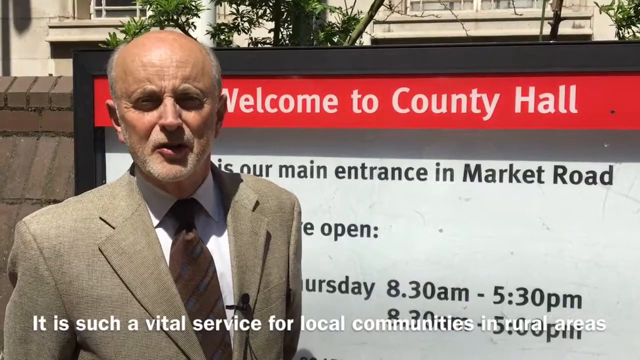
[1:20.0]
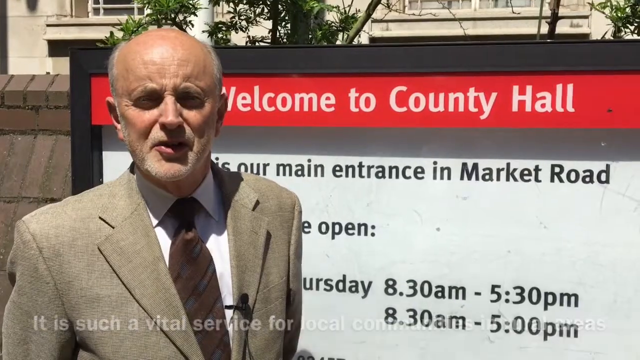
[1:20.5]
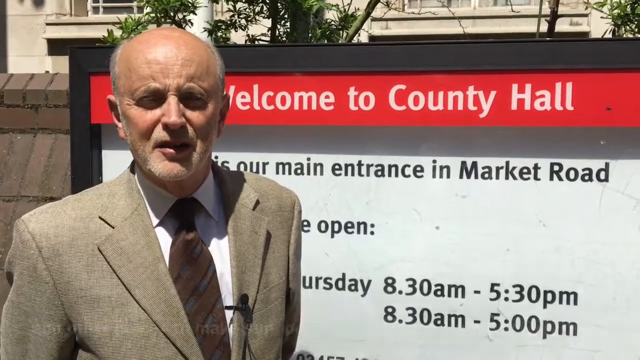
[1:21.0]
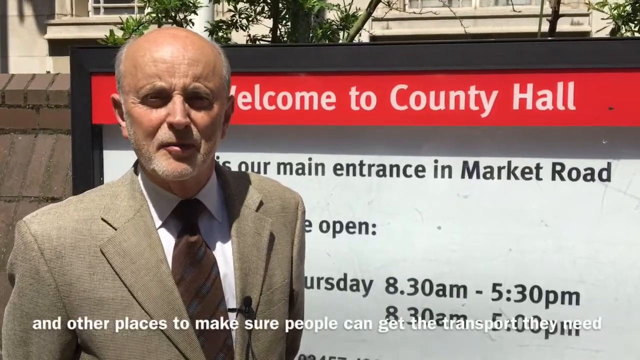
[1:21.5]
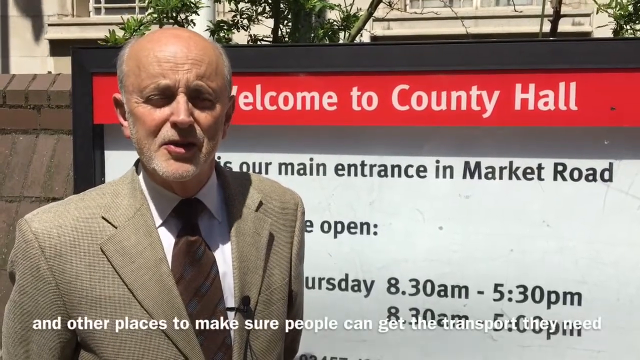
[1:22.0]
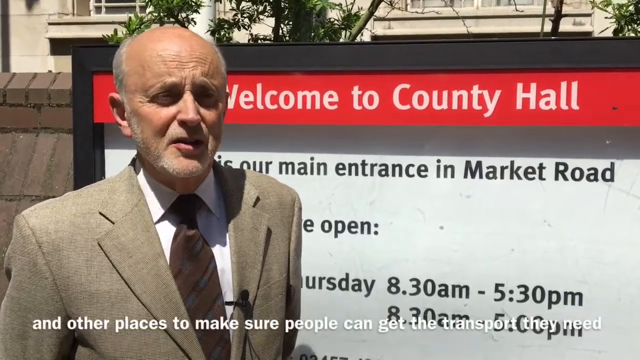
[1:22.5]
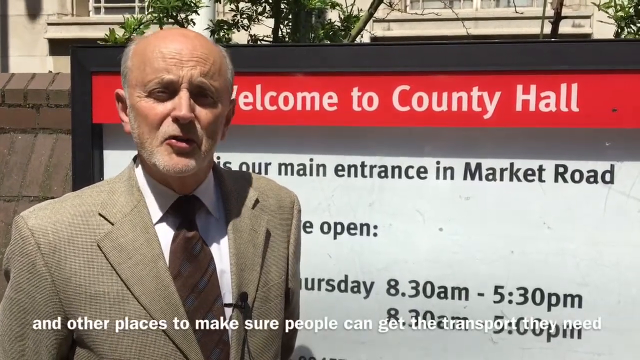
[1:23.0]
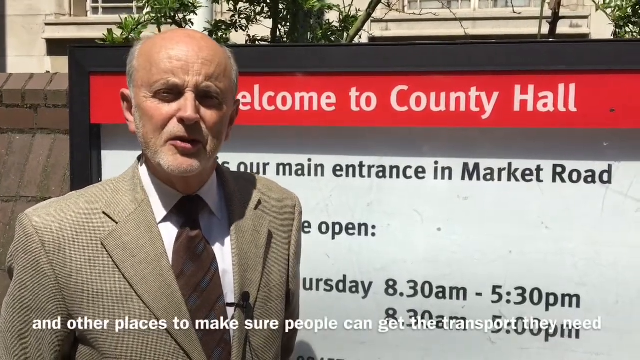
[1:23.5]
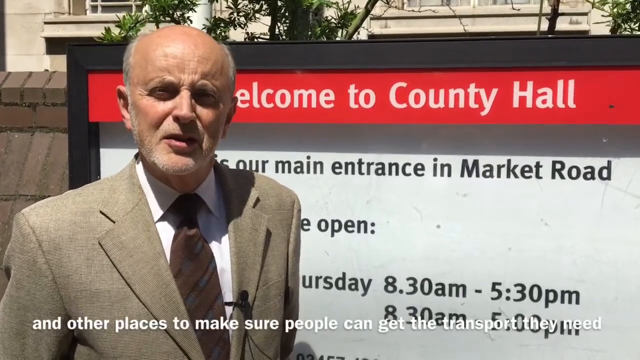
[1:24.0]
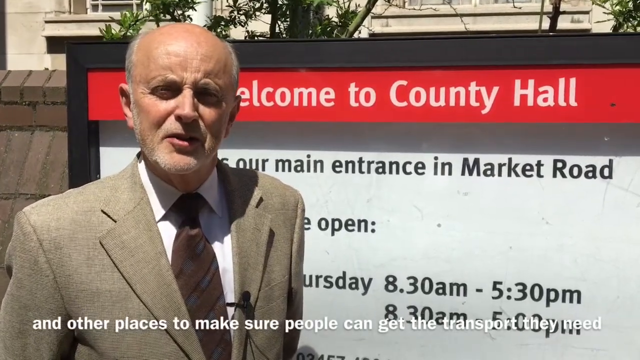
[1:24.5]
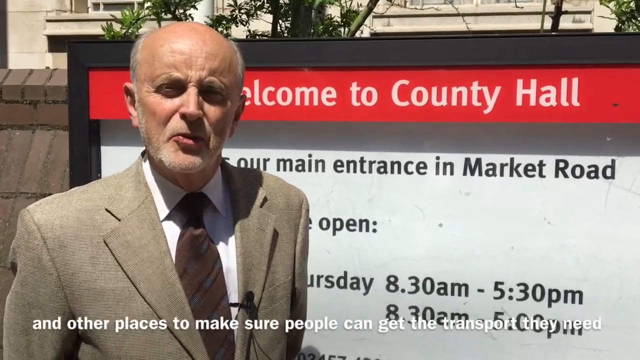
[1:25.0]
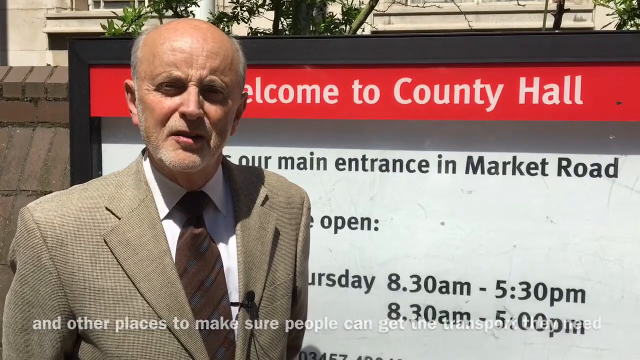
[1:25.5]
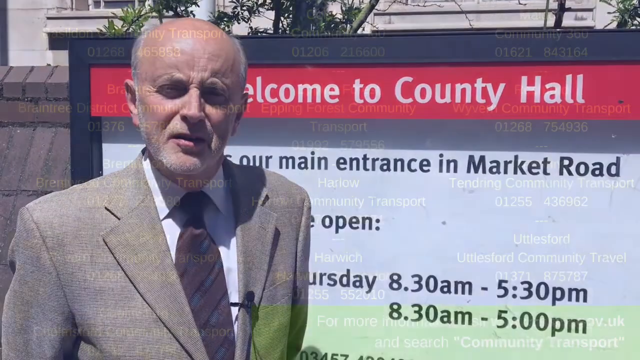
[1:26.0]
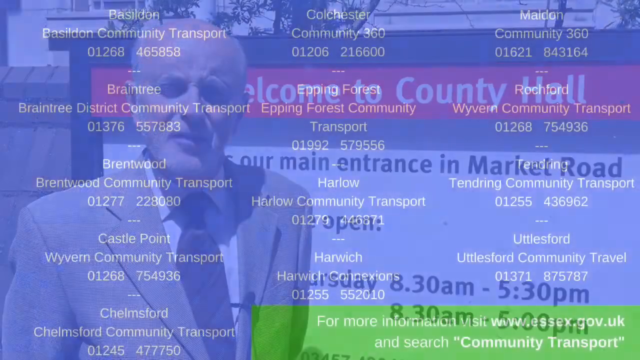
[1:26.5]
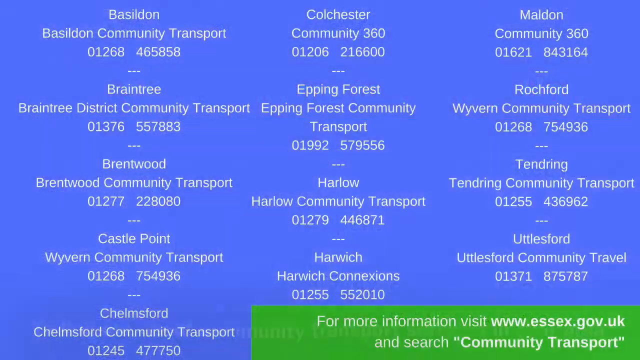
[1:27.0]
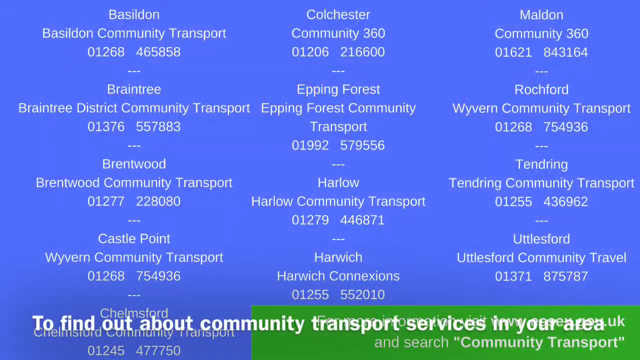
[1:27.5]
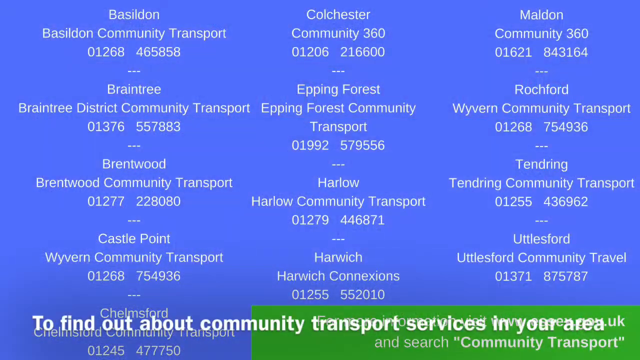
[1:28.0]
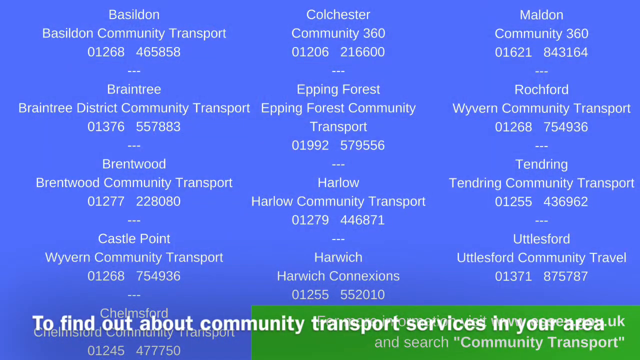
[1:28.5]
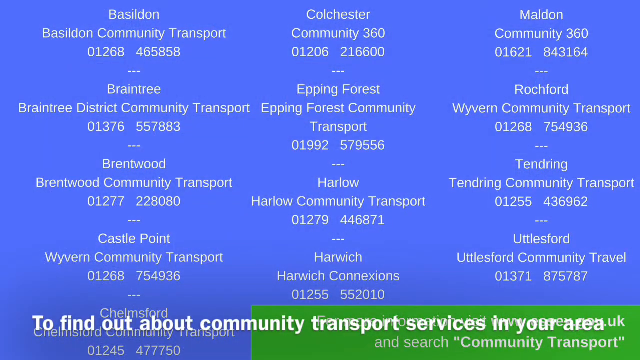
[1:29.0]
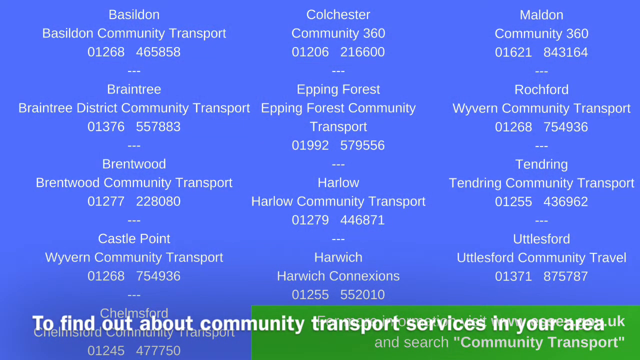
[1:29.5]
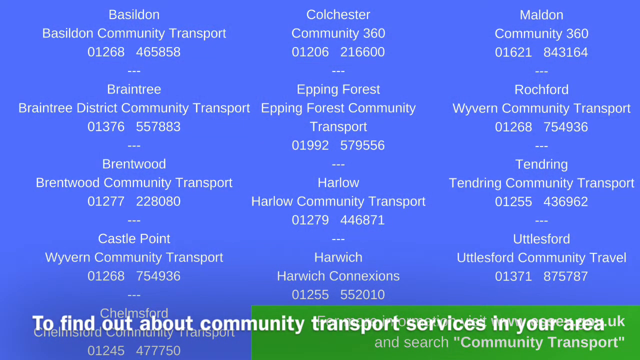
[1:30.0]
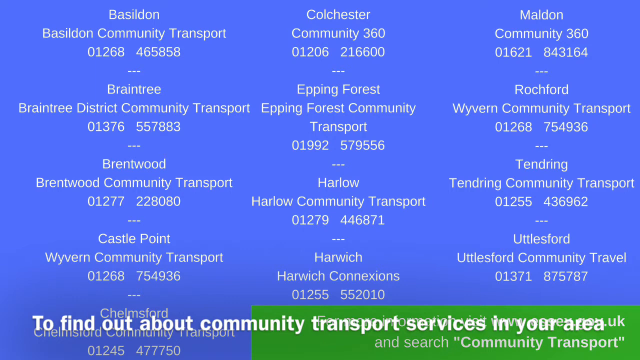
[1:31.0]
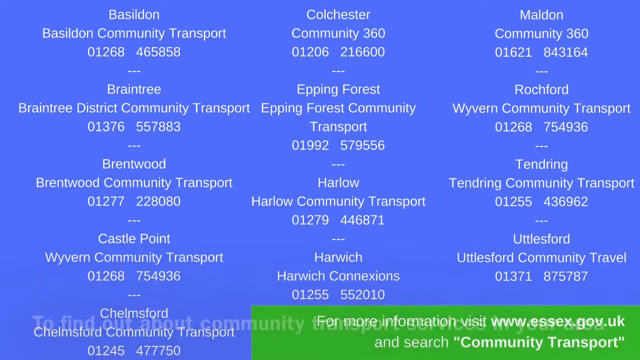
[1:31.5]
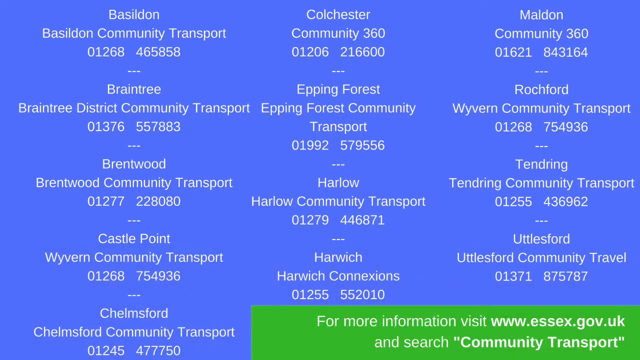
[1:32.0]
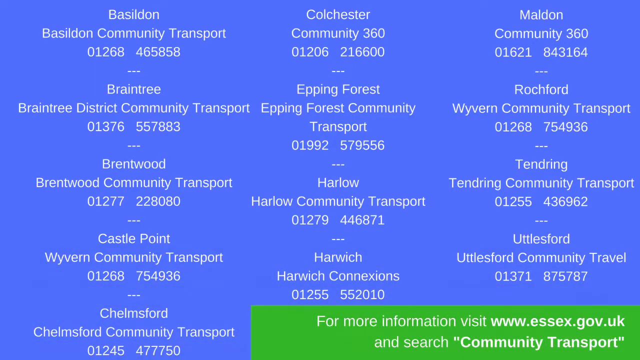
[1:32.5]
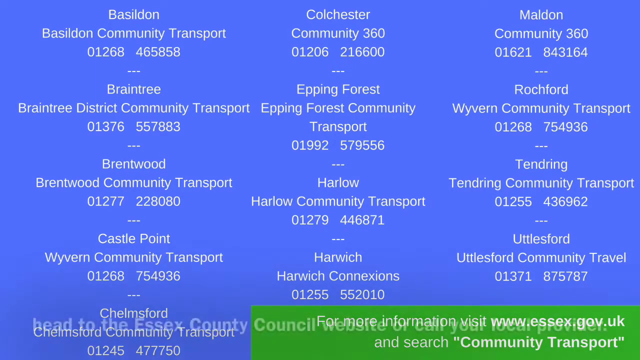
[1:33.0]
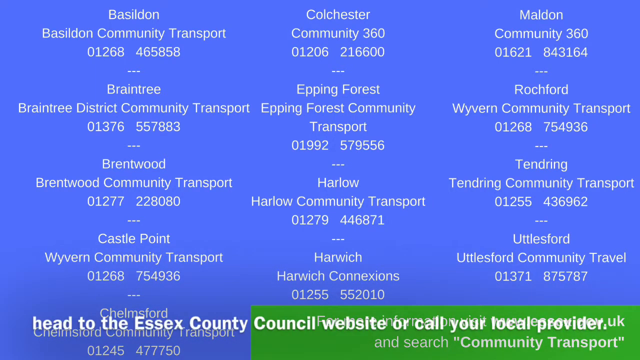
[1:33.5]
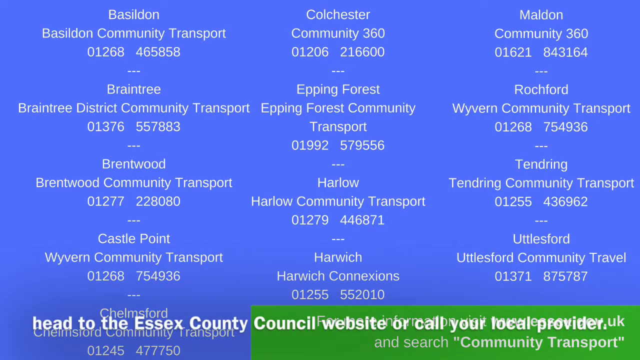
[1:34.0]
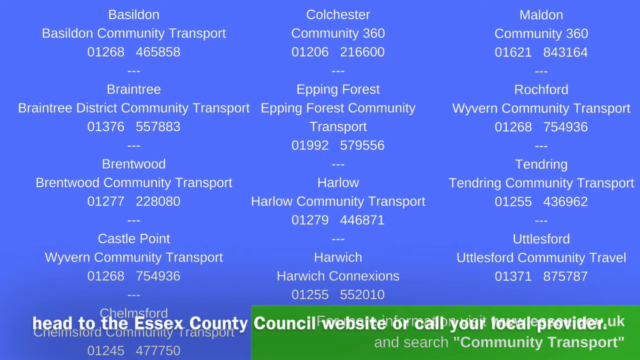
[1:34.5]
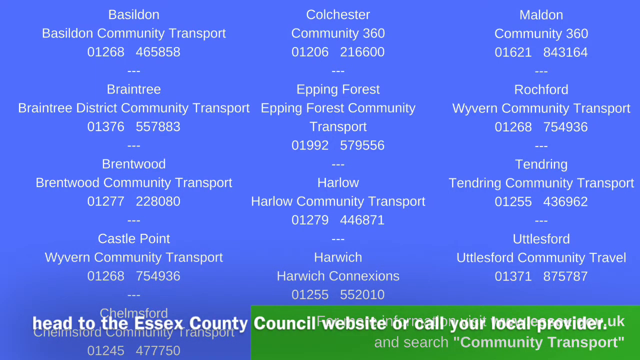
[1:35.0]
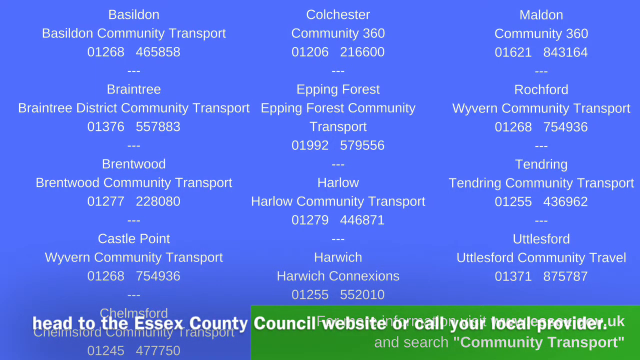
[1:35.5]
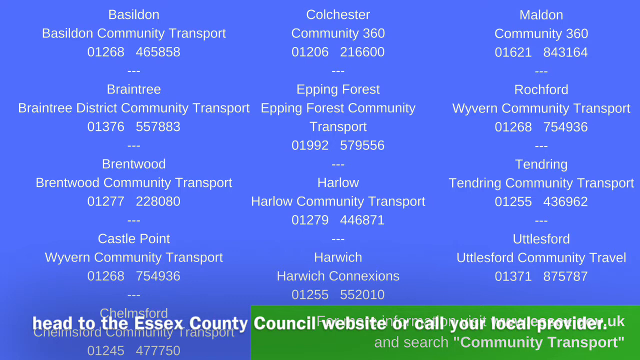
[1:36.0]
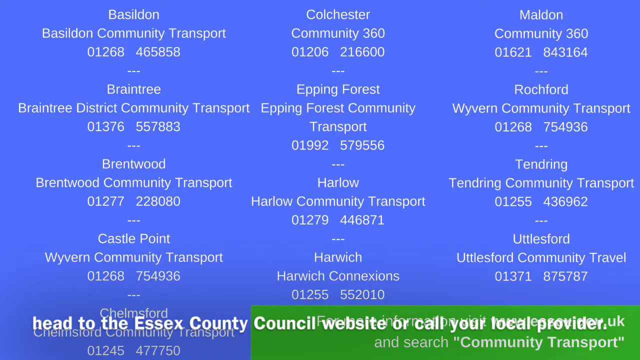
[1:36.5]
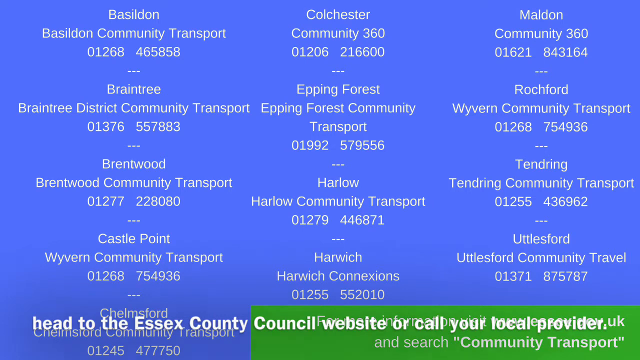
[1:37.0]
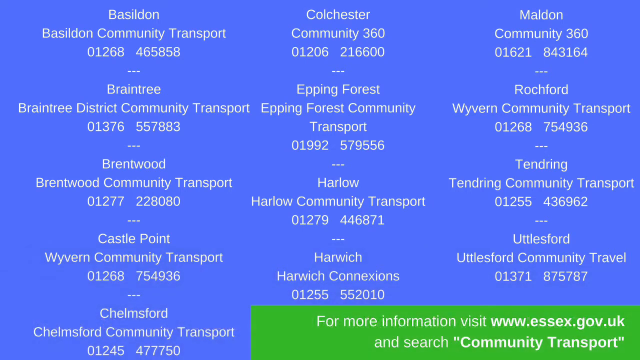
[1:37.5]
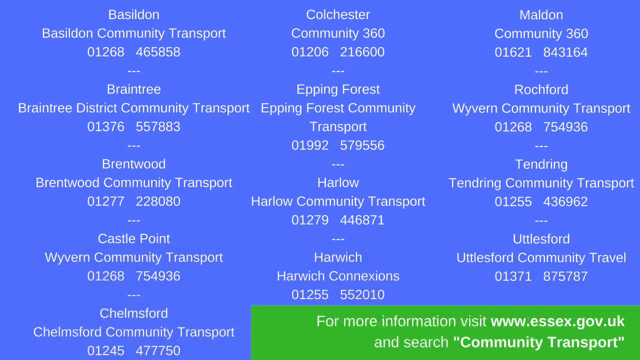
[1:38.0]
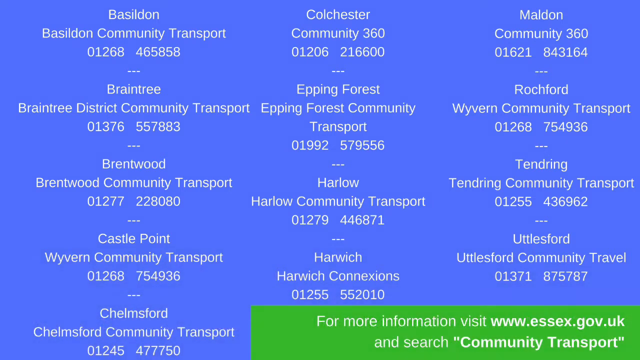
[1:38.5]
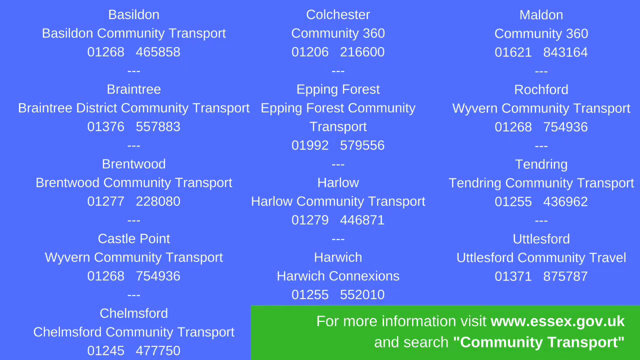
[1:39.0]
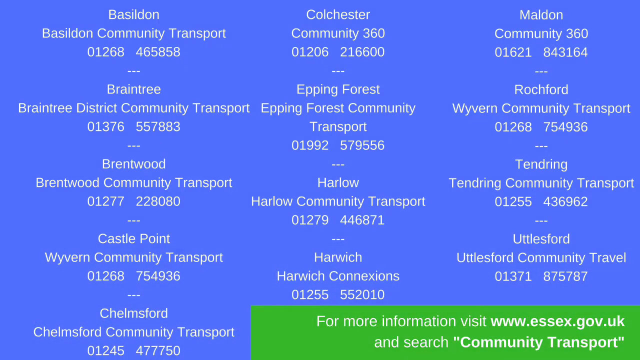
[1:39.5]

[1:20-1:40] An older man is standing outside in front of a sign that reads "Welcome to County Hall", with "this is our main entrance on Market Road" below it, followed by the hours of operation. He wears a dark tan blazer, a white button-down shirt and a brown tie; he is mostly bald, with short, thin gray hair on the sides of his head and a short beard. He squints as the sun shines brightly and speaks to the camera. White captions at the bottom of the video read "It is such a vital service for local communities in rural areas and other places to make sure people can get the transport they need." The screen then changes to a light bluish-purple background listing community transport services in the area for Basildon, Braintree, Brentwood, Castle Point, Chelmsford, Colchester, Epping Forest, Harlow, Harwich, Maldon, Rochford, Tendring and Uttlesford, along with the name of each transport company and its phone number. Toward the right at the bottom of the screen, a green rectangular box reads in white font "for more information visit www.essex.gov.uk and search community transport." A white caption at the bottom of the screen also reads "to find out about community transport services in your area Head to the Essex County Council website or call your local provider."